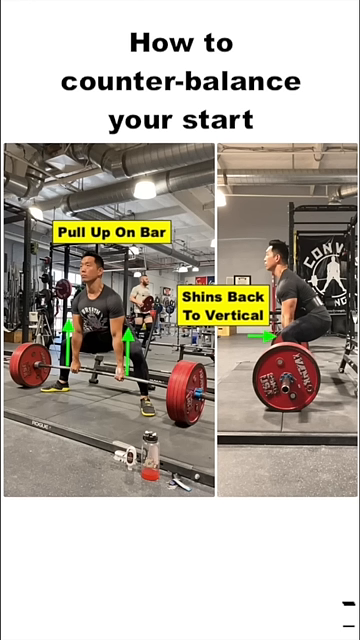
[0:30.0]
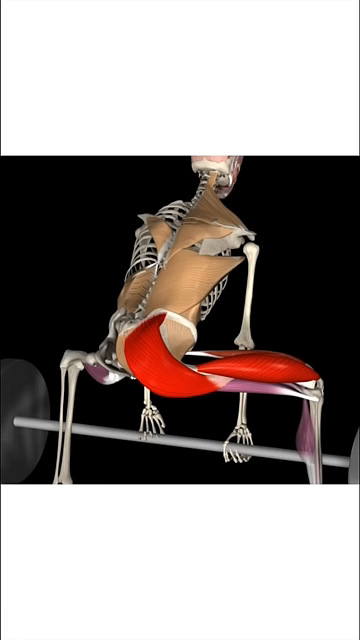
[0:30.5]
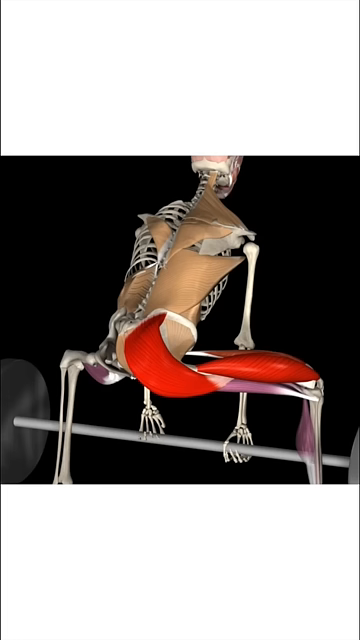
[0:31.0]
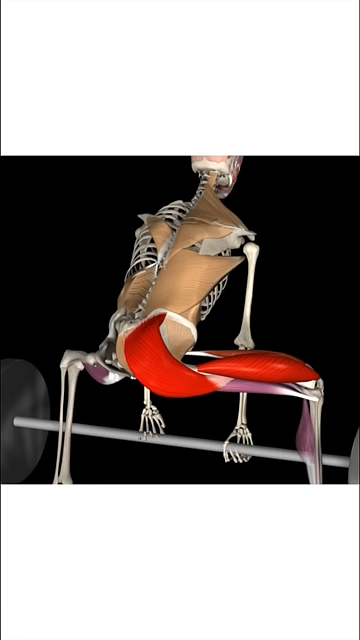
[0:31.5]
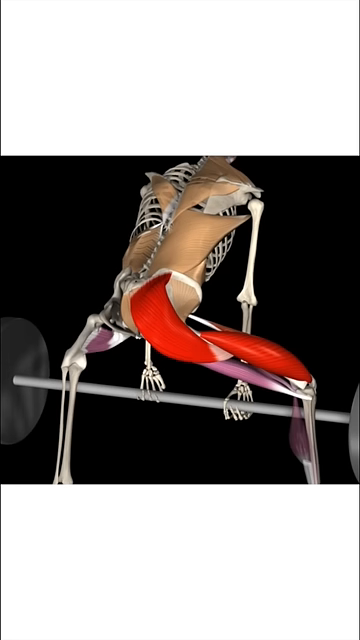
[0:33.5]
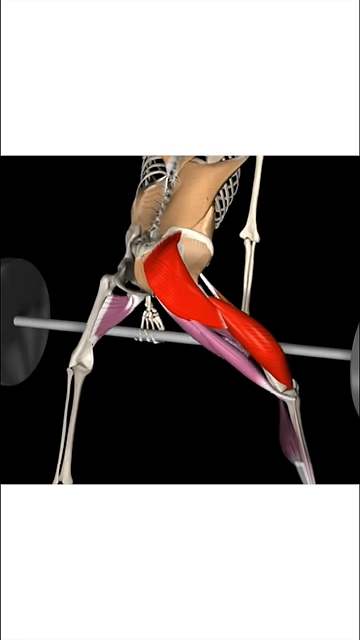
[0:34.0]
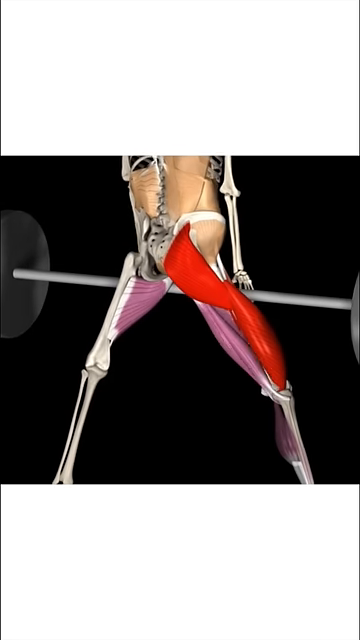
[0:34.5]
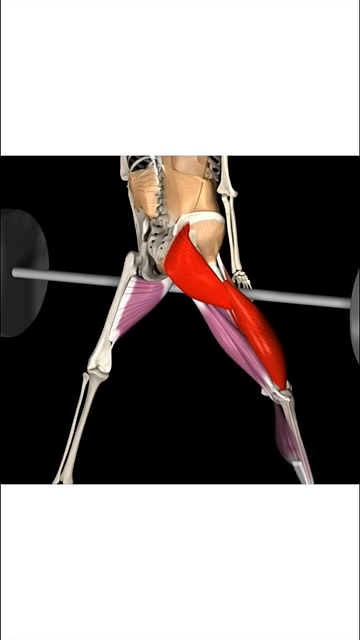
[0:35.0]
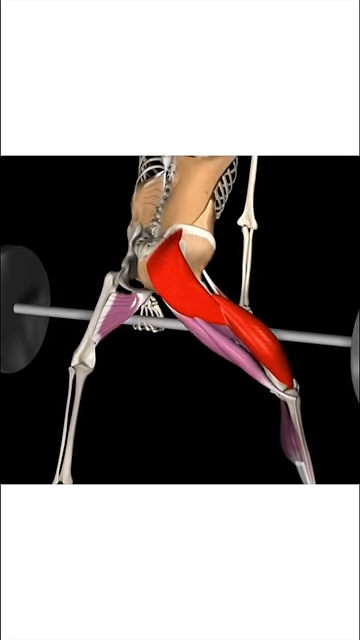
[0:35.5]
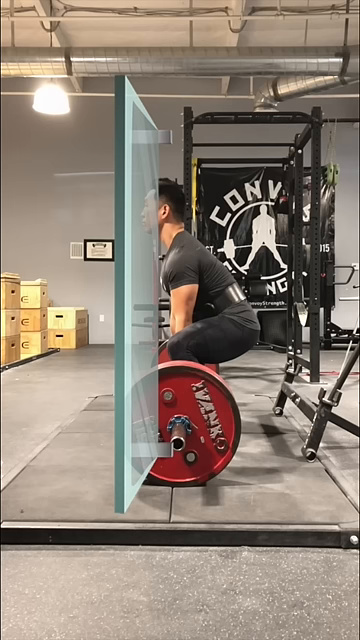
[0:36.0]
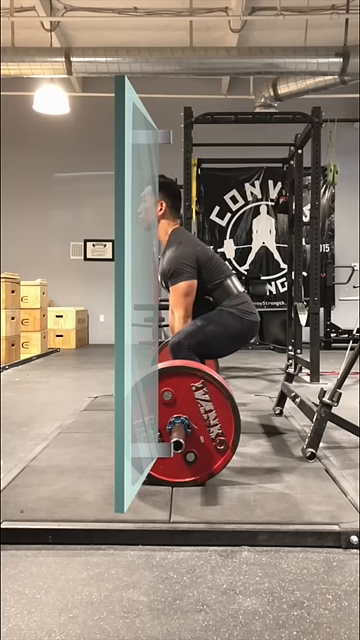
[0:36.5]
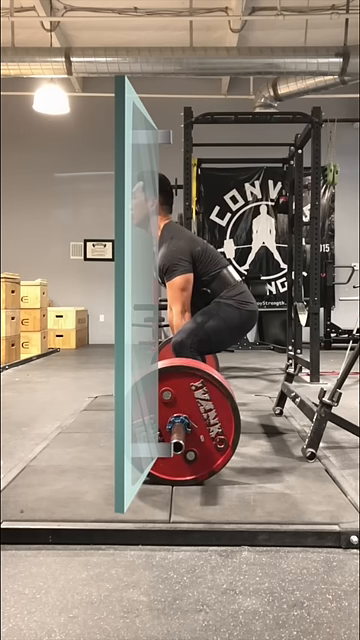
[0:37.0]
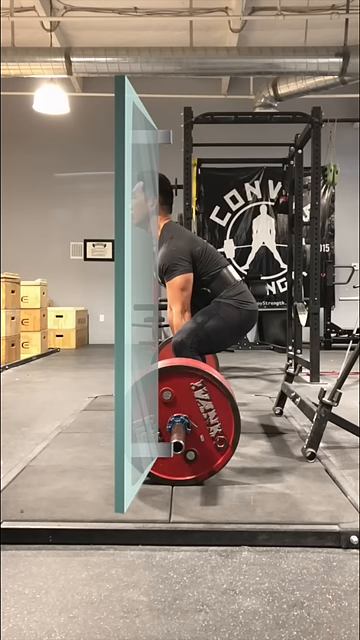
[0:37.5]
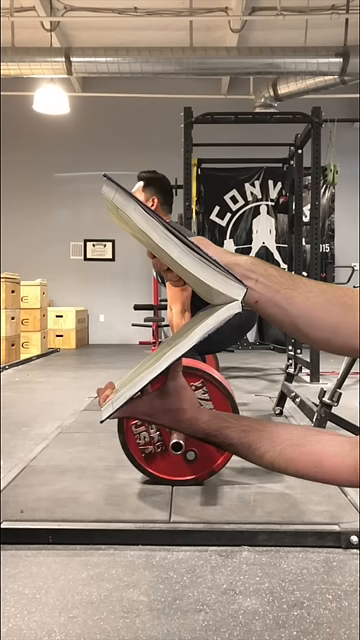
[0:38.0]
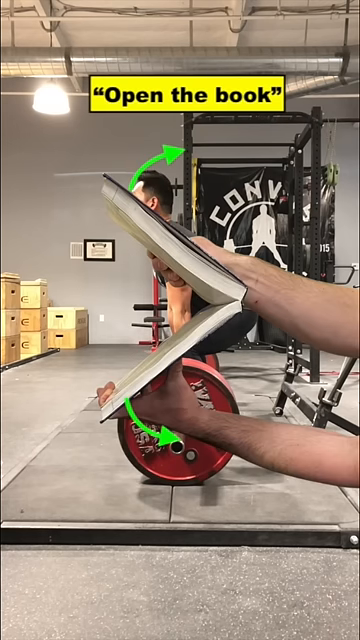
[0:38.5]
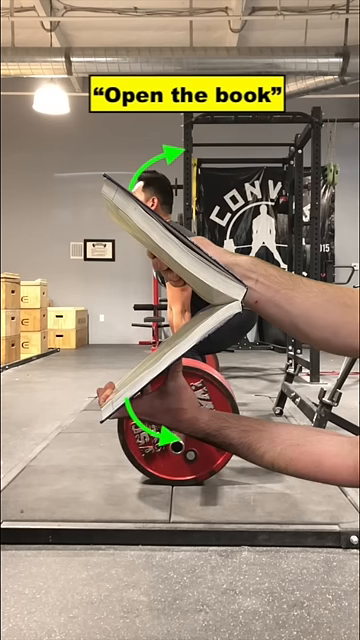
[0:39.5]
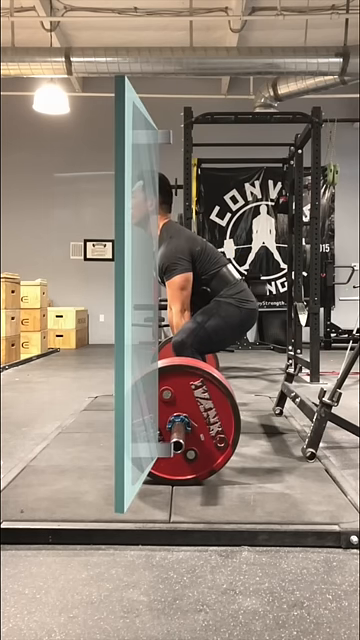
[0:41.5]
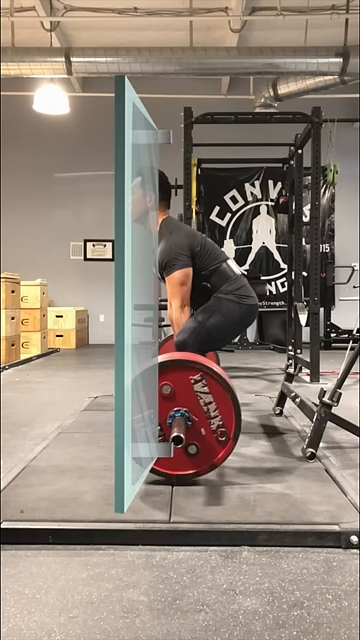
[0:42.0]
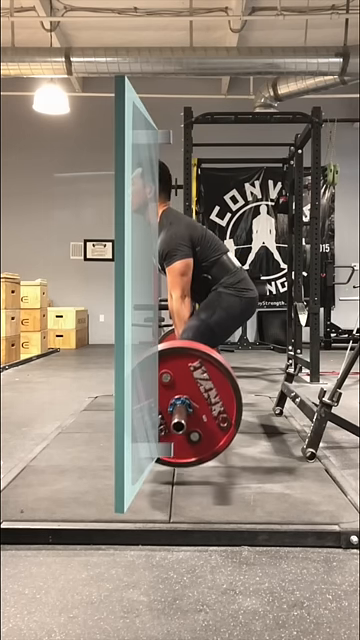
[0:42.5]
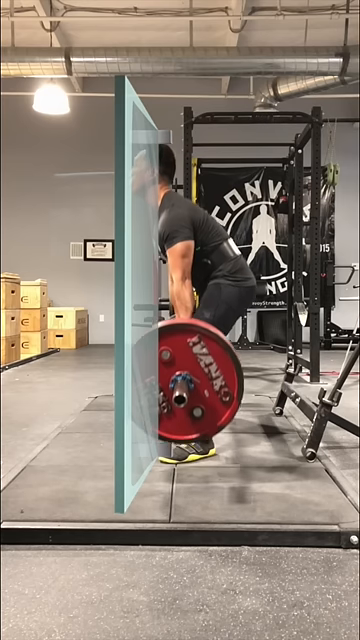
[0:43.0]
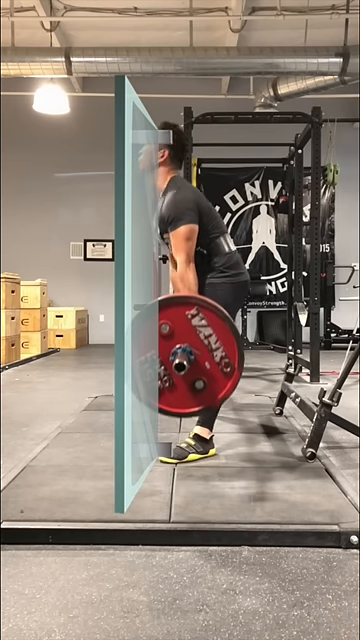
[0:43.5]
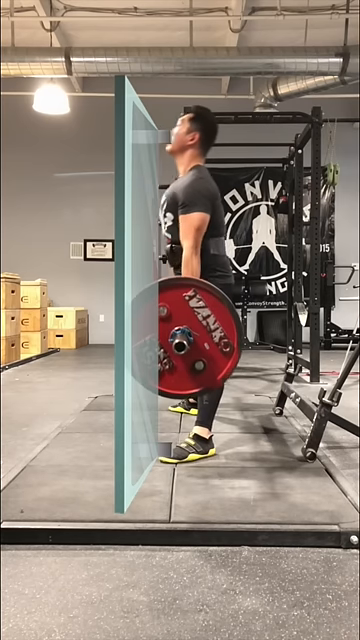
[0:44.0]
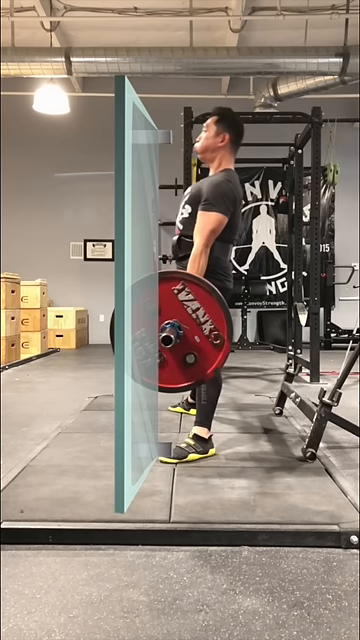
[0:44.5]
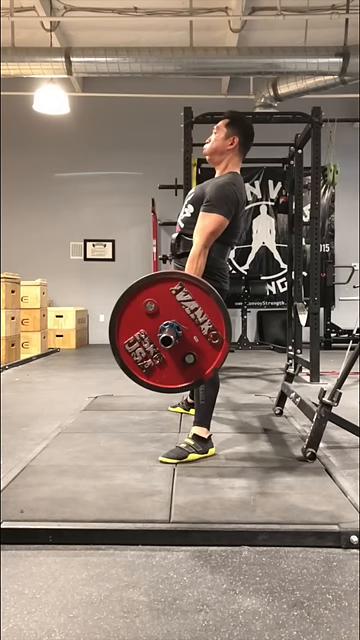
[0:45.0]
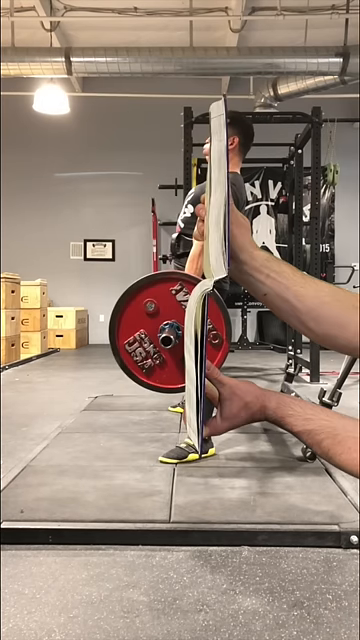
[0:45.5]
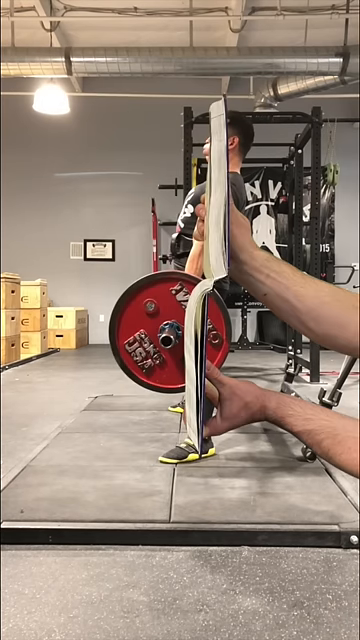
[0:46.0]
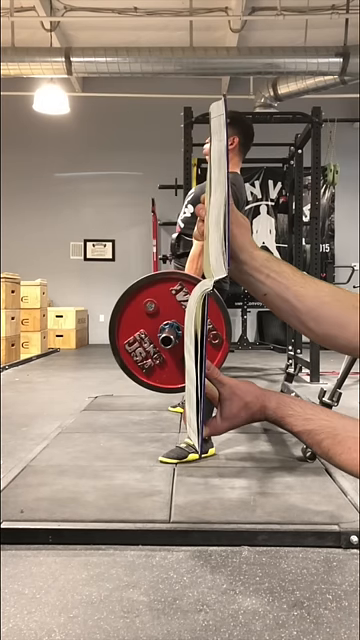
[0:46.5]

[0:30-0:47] An X-ray diagram shows the muscles and bone structure of a skeleton lifting a weight and what it does to the muscles. The Asian man is then shown again in the gym doing a deadlift the proper way, with his posture straight throughout his body. Someone puts down a book, opens it and straightens it, and a diagram in front of the man doing the deadlift compares how straight his posture is with the book, showing that his back has the same alignment as the straight book.